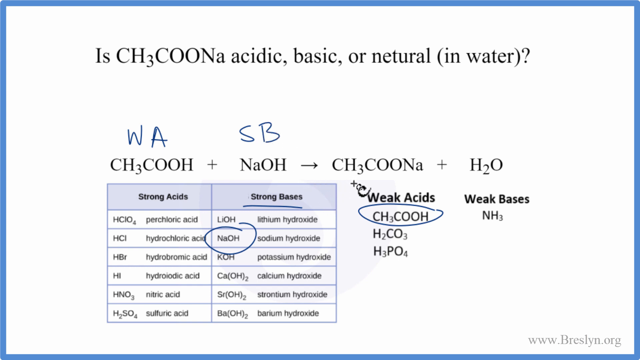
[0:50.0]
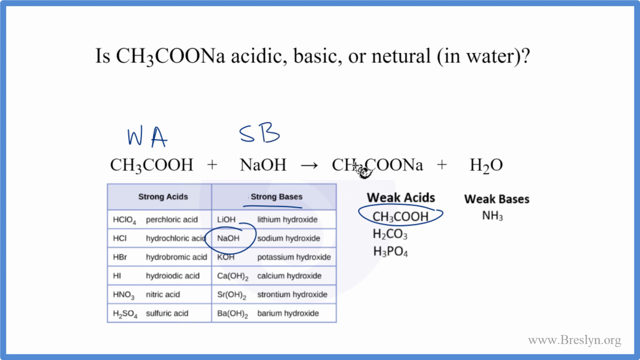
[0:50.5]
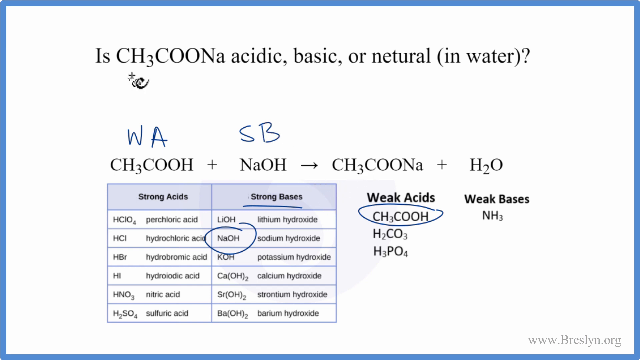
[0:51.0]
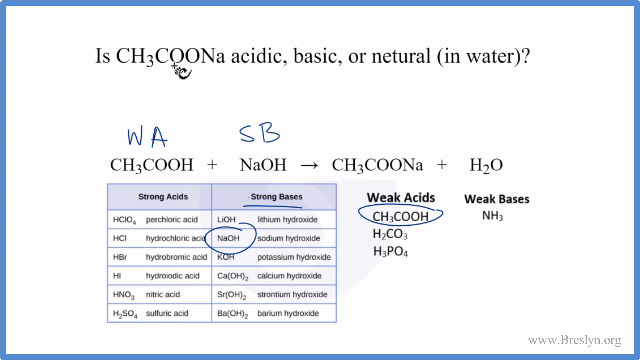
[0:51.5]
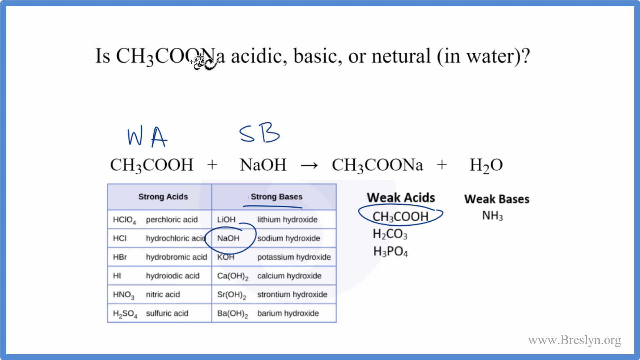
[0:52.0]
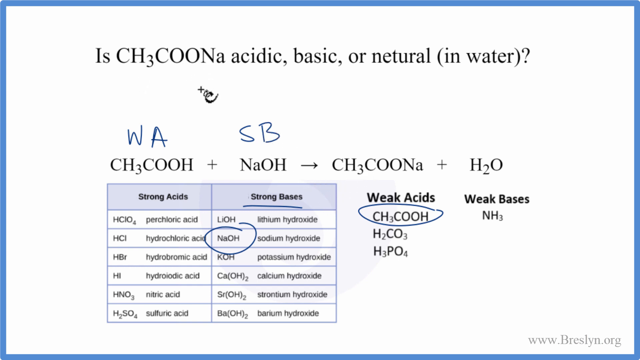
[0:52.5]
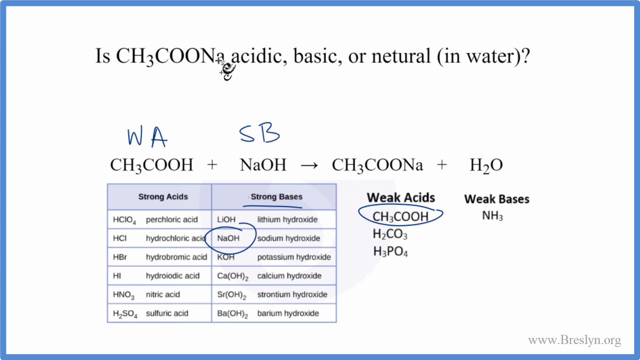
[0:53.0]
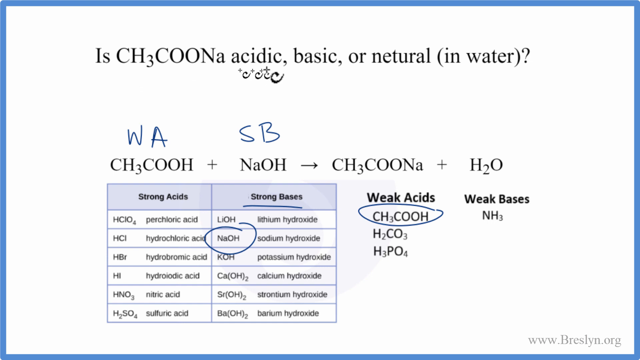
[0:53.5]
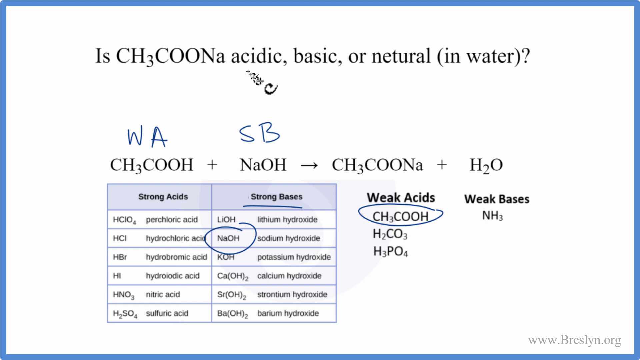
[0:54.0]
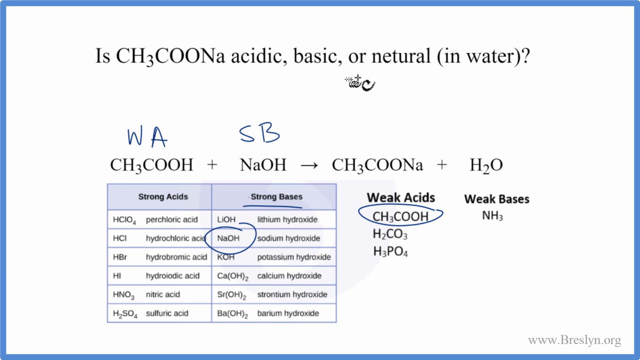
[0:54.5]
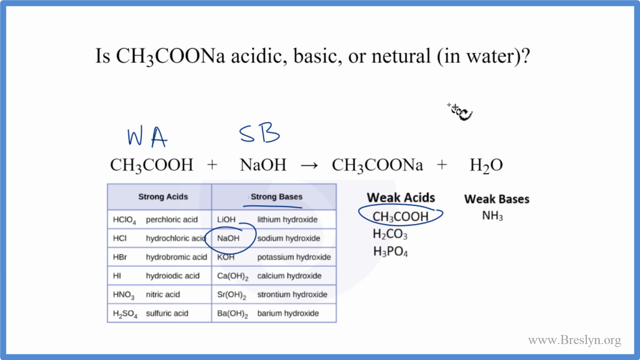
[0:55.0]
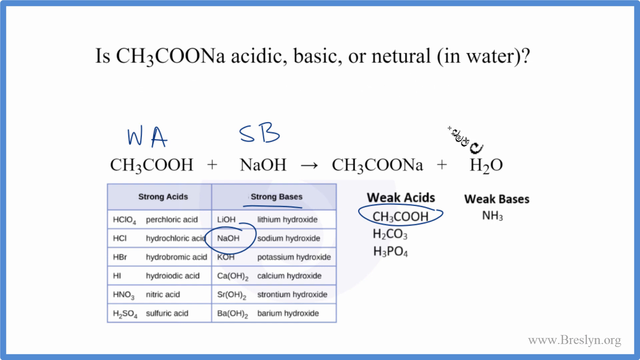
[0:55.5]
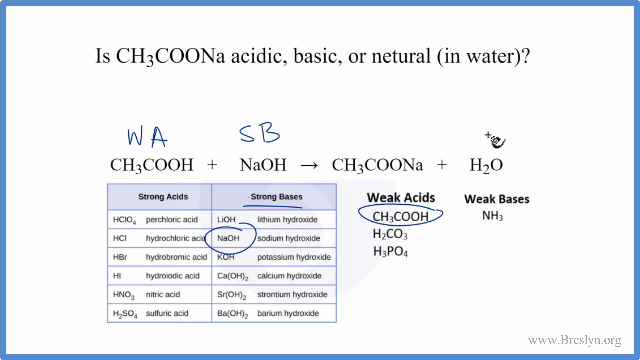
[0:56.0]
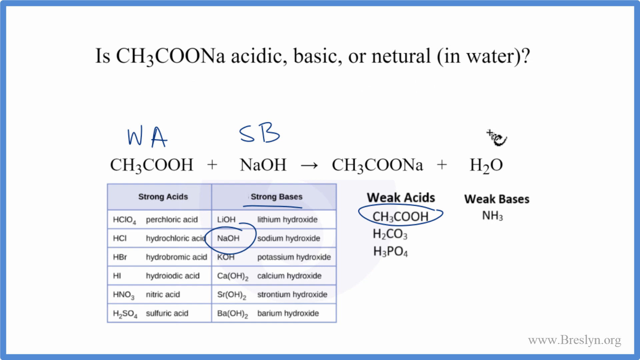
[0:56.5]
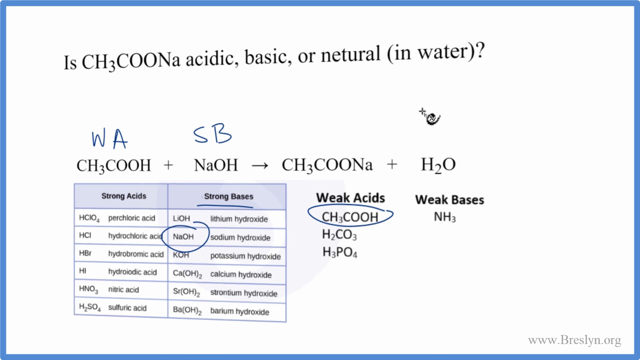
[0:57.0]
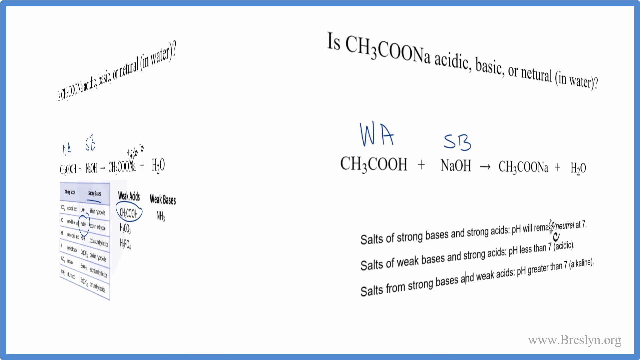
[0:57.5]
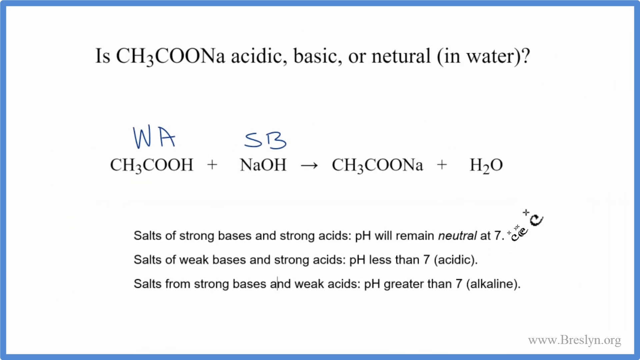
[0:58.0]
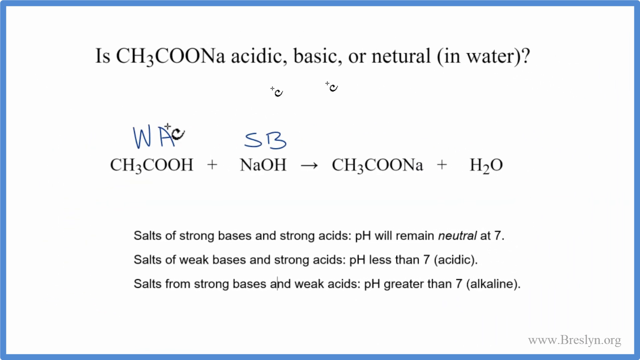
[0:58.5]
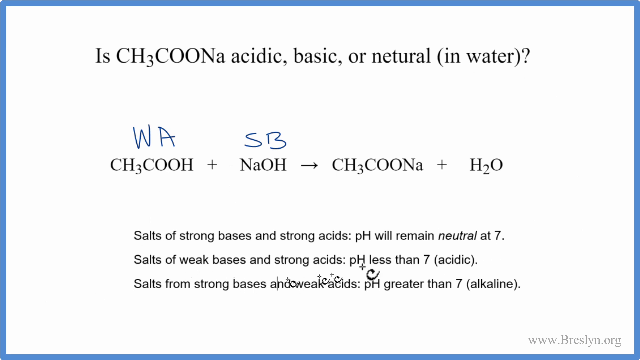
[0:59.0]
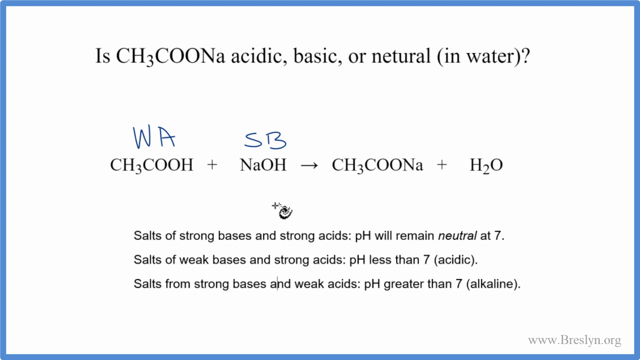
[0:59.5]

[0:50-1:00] Sodium hydroxide is classified as a strong base and is outlined on the slide. The slide then changes with a right-to-left transition, as if turning a page. The new slide keeps the same information but without the table of substances and their acidity classification. The video seems to explain, in a simple format, the principles for classifying compounds when mixed with water.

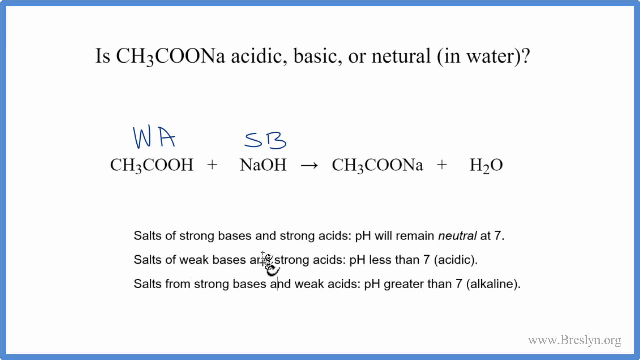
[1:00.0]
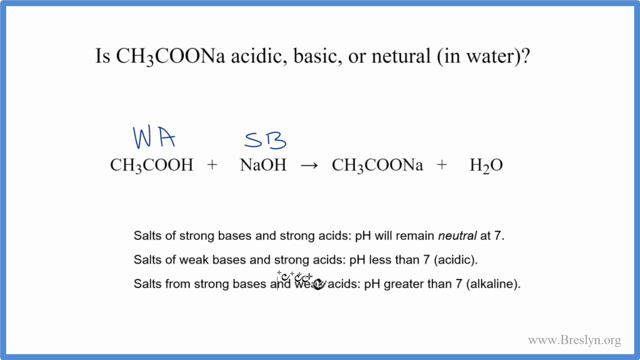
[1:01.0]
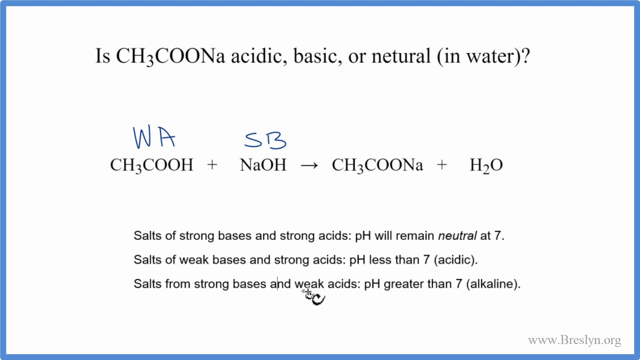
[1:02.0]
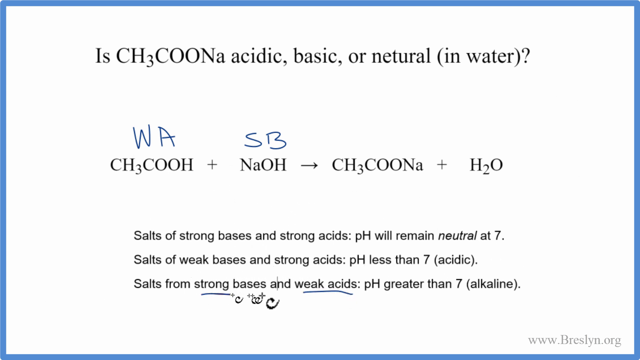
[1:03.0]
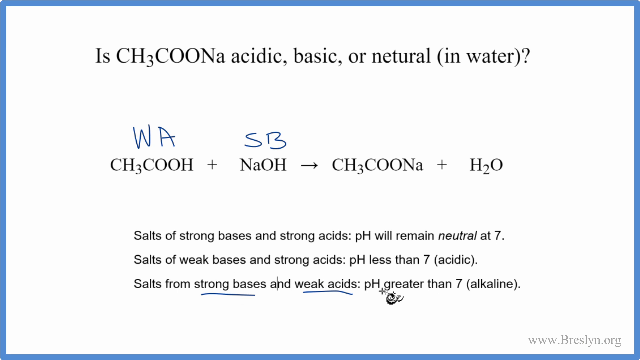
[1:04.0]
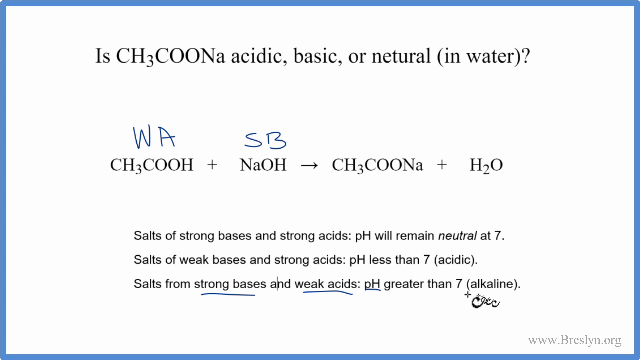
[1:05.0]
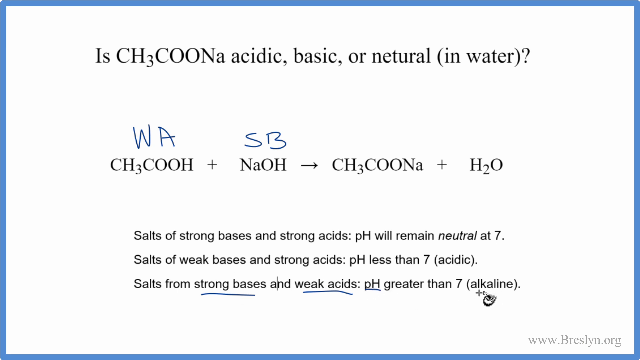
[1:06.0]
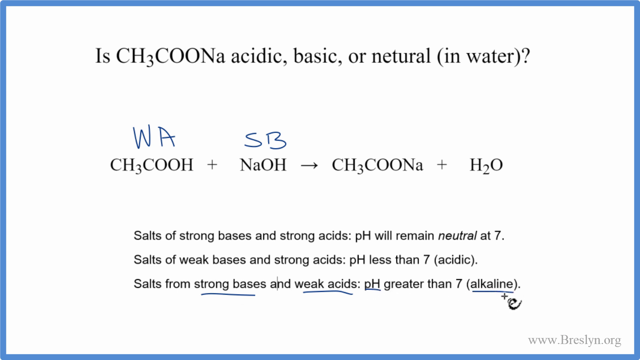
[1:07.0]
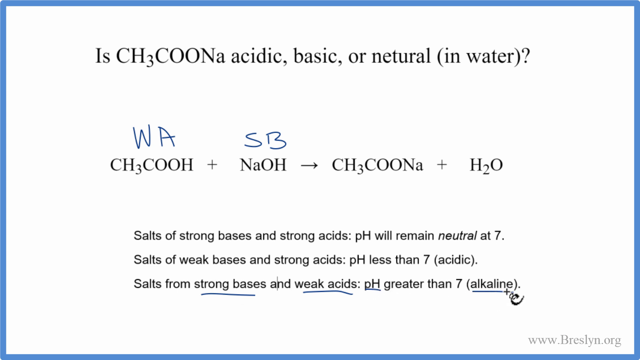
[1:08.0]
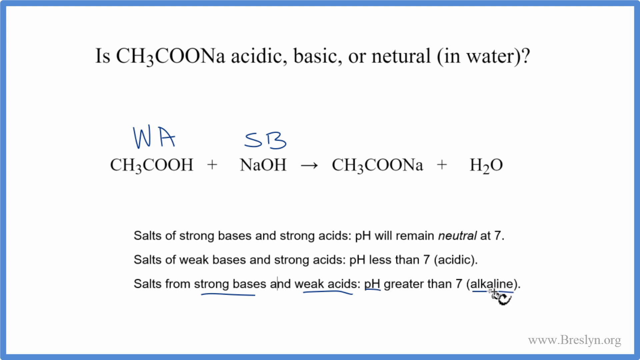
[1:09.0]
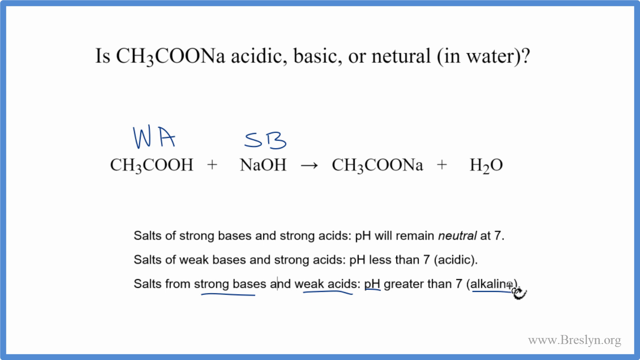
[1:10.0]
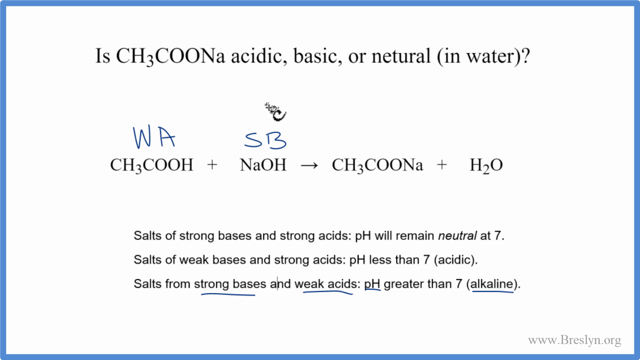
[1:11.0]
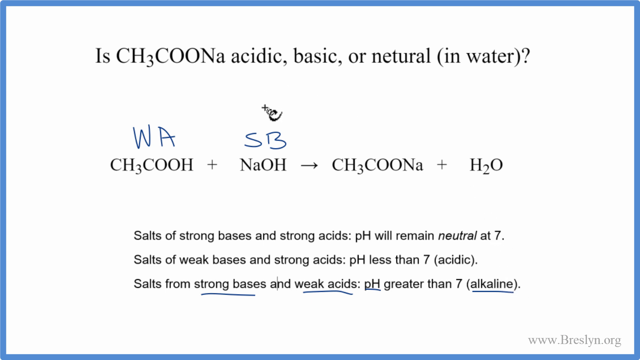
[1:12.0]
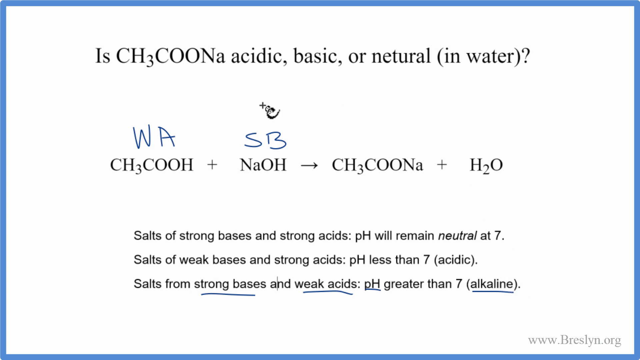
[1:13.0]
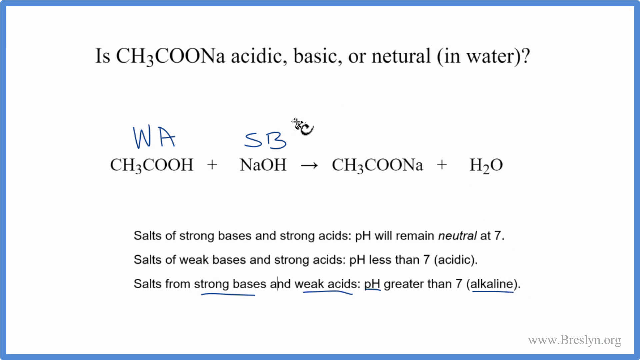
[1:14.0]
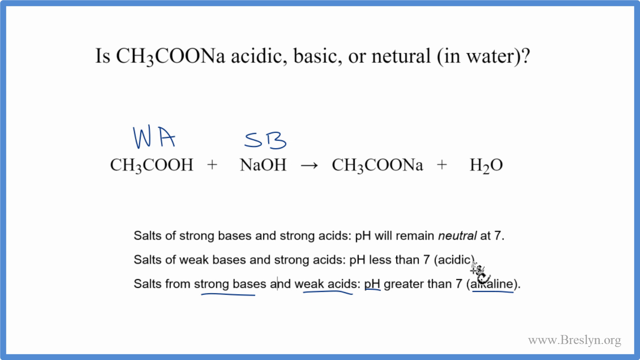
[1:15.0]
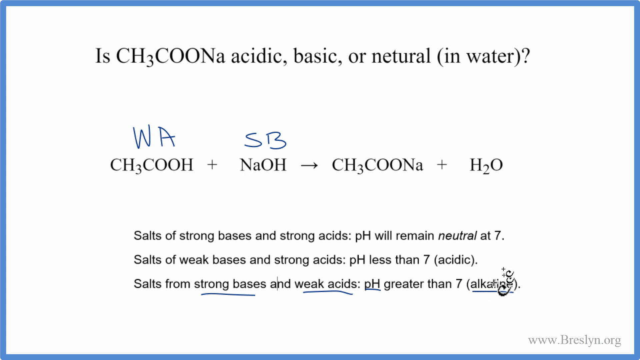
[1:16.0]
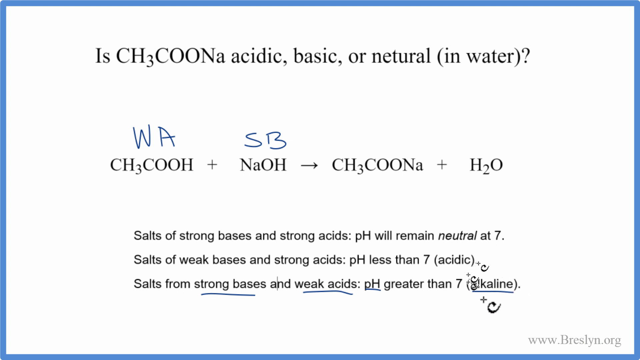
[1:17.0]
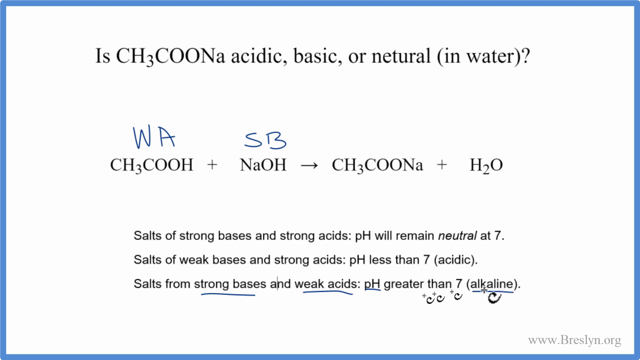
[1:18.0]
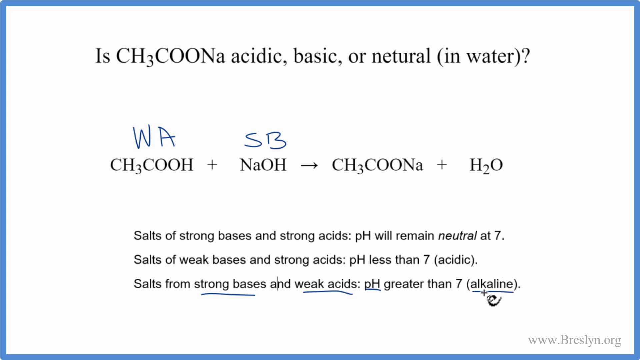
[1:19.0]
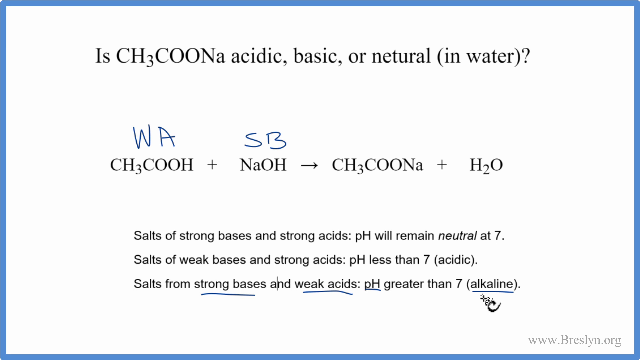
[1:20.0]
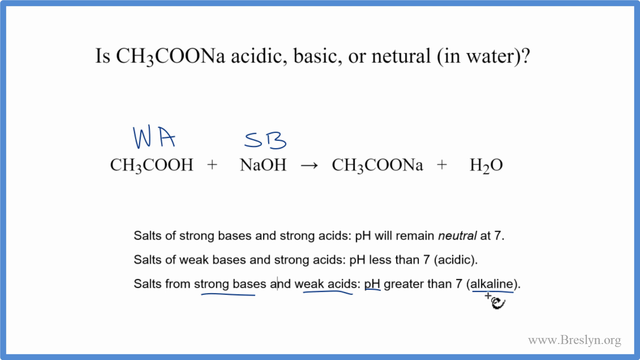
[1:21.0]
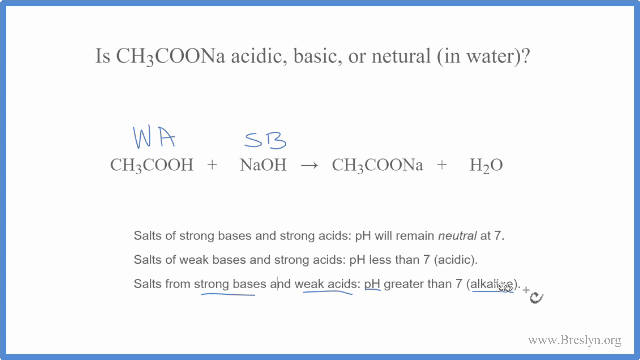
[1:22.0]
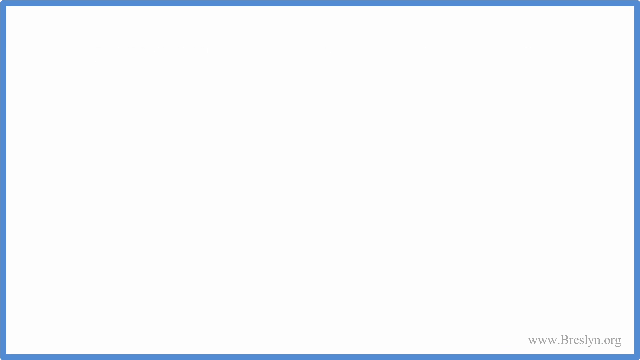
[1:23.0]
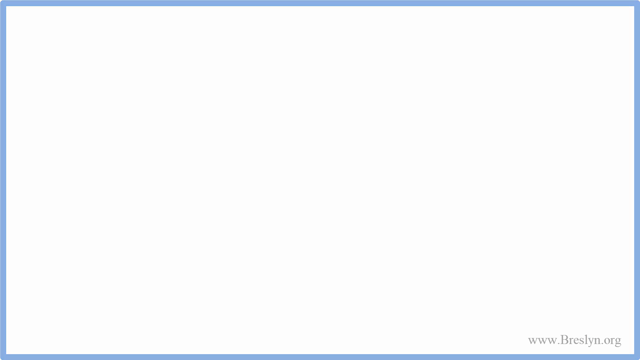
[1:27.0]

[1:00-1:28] The slide is white, with the initial content but without the table. The presenter underlines the terms "weak acids", "strong bases" and "pH", as well as the word "alkaline", and keeps moving the cursor across the different terms while developing the reasoning, until the class ends. In the lower right corner the website name "www.braziling.org" is visible, apparently the page where the content can be found. The slide is the same as at the beginning, only with some annotations: "WA" marks weak acids on CH3COOH, and "Sb" marks strong bases on NaOH.